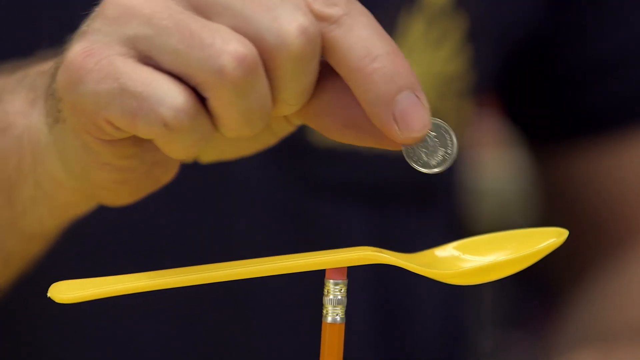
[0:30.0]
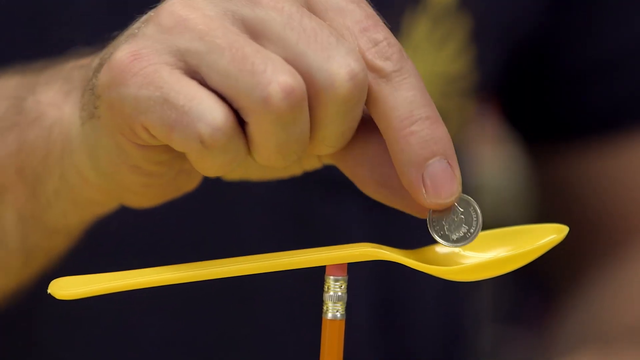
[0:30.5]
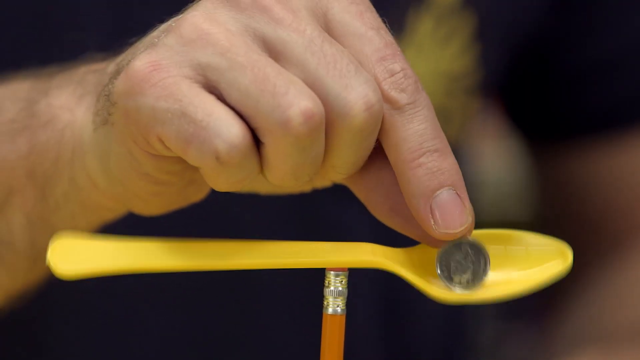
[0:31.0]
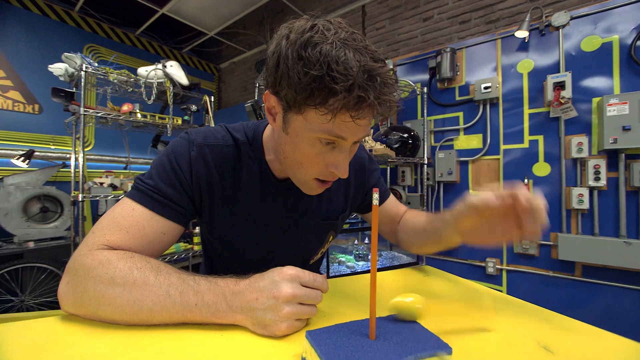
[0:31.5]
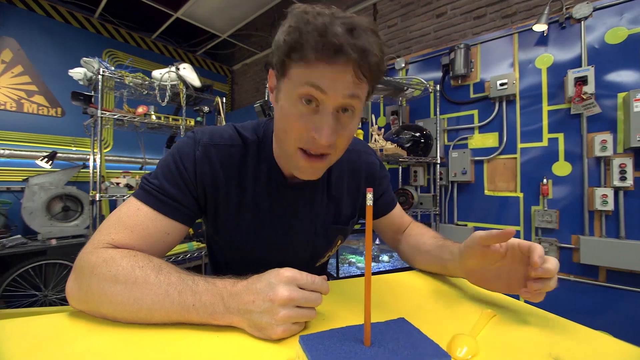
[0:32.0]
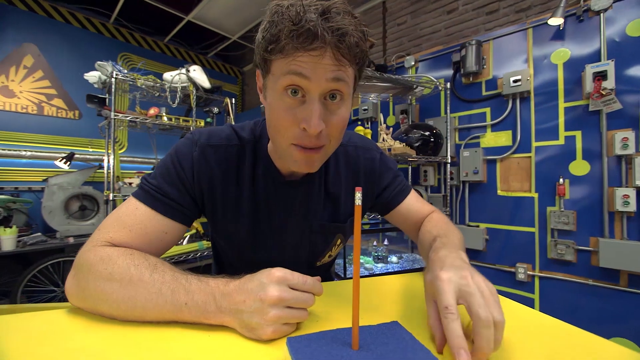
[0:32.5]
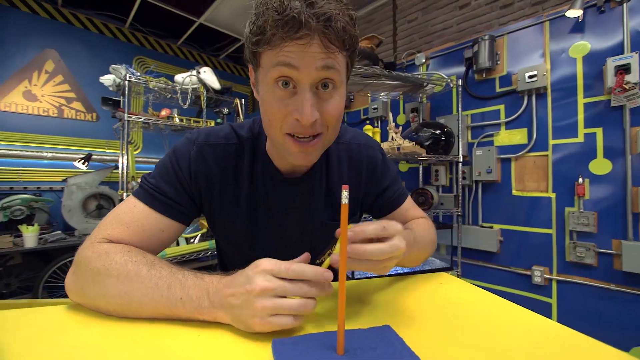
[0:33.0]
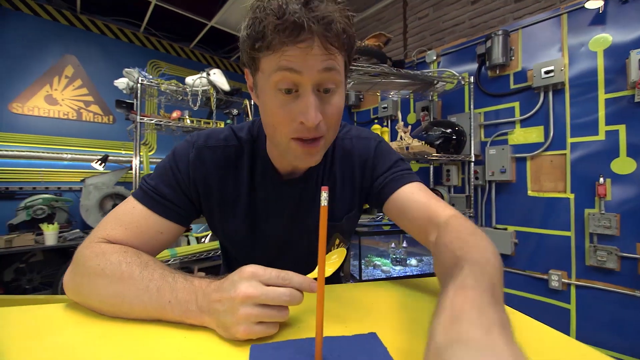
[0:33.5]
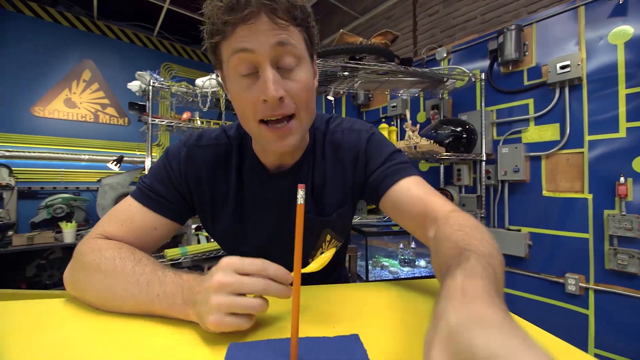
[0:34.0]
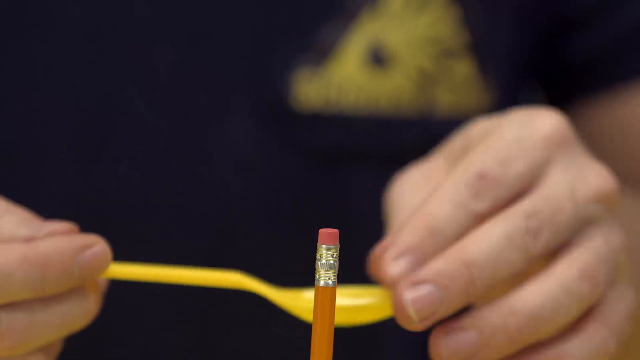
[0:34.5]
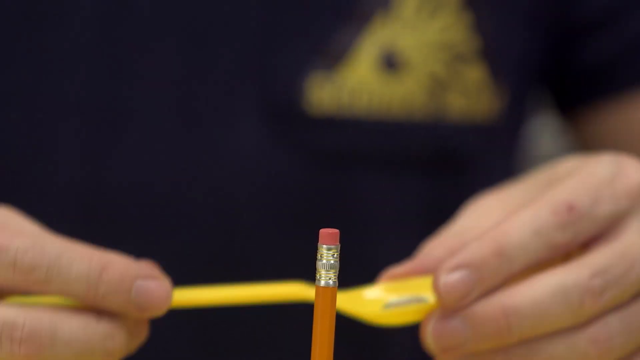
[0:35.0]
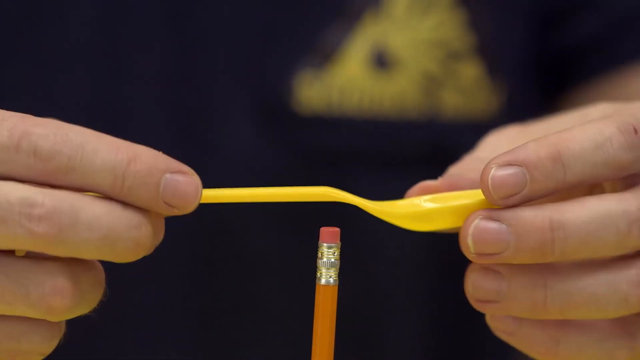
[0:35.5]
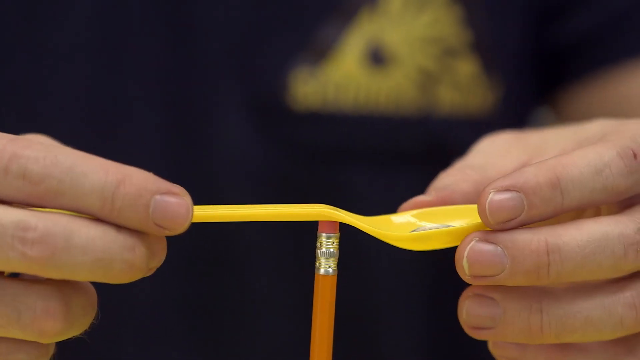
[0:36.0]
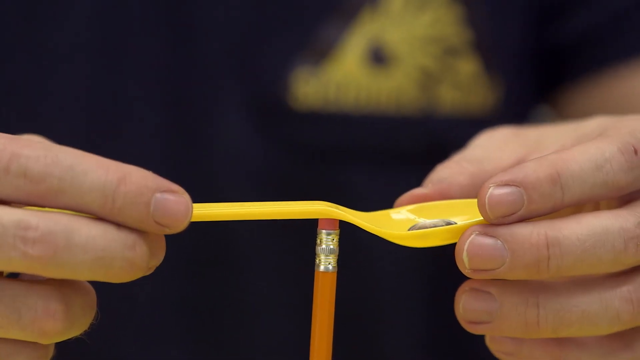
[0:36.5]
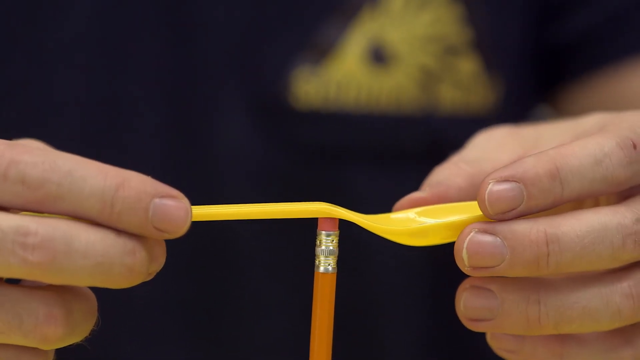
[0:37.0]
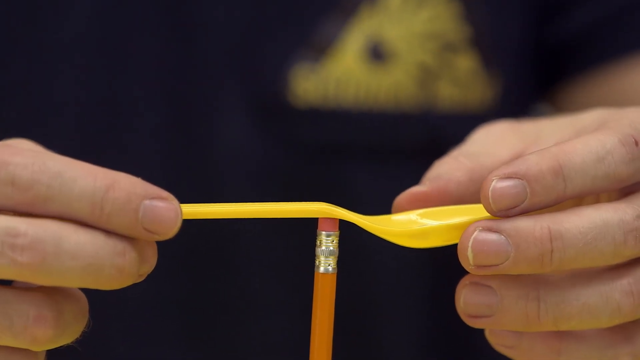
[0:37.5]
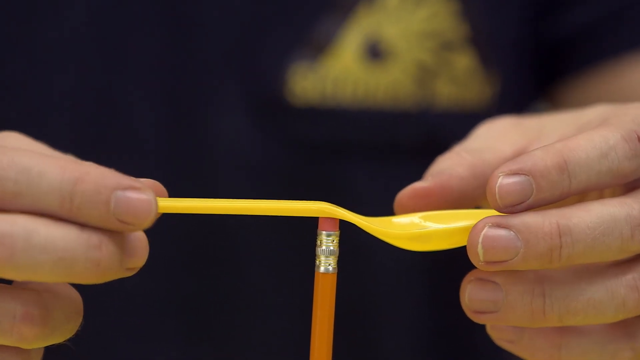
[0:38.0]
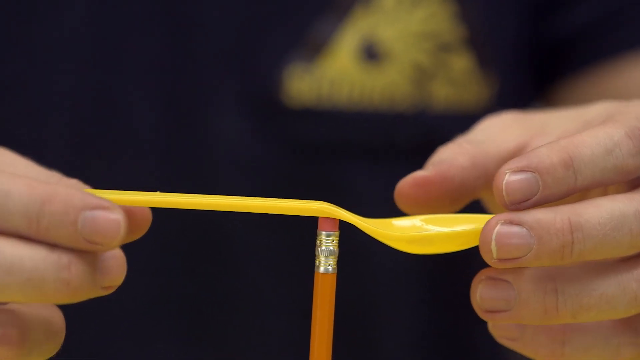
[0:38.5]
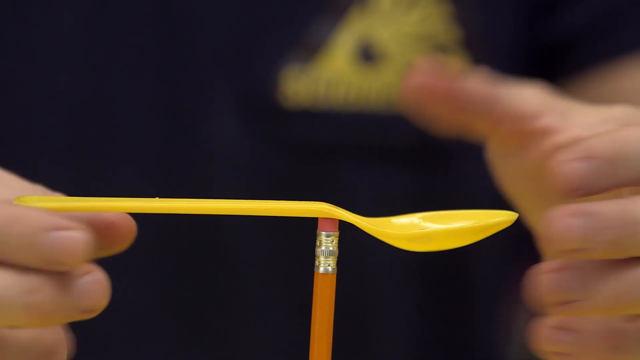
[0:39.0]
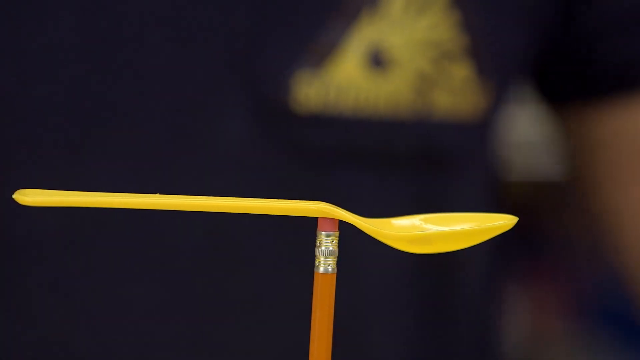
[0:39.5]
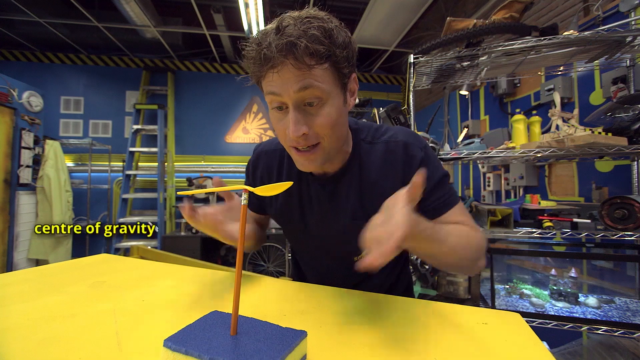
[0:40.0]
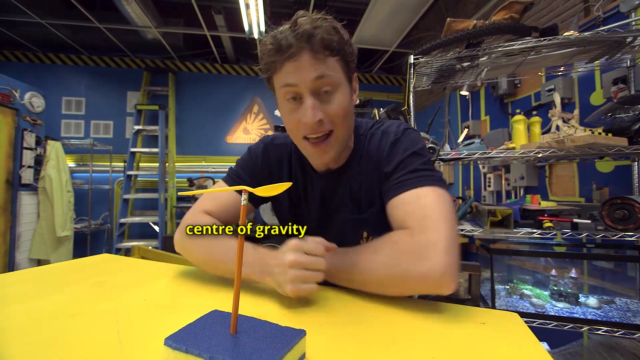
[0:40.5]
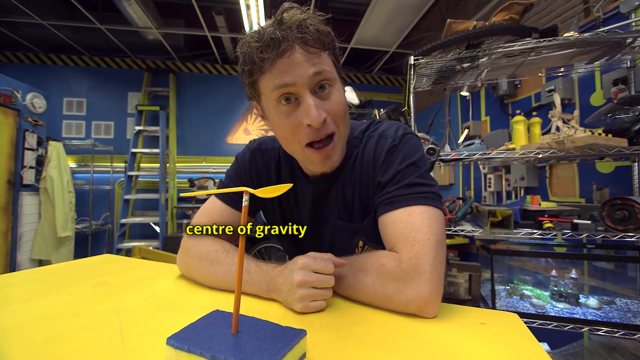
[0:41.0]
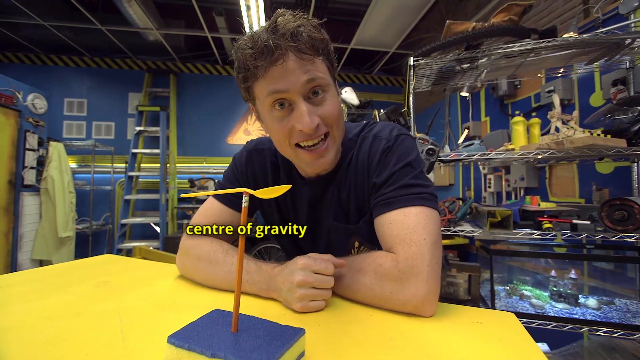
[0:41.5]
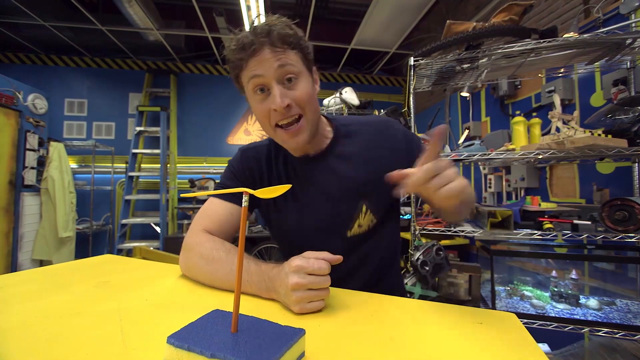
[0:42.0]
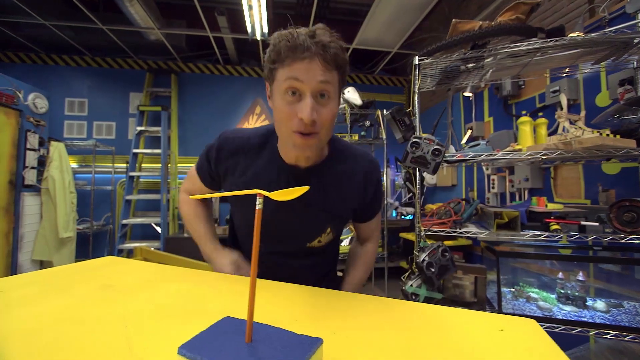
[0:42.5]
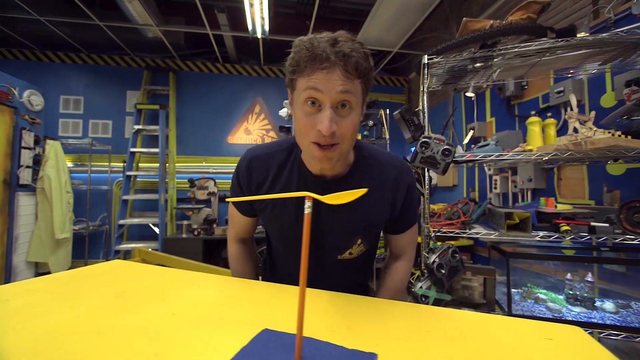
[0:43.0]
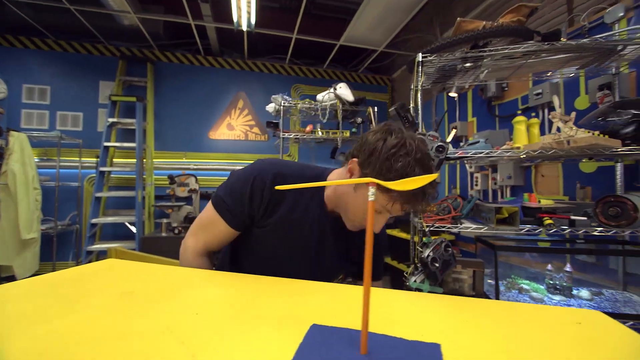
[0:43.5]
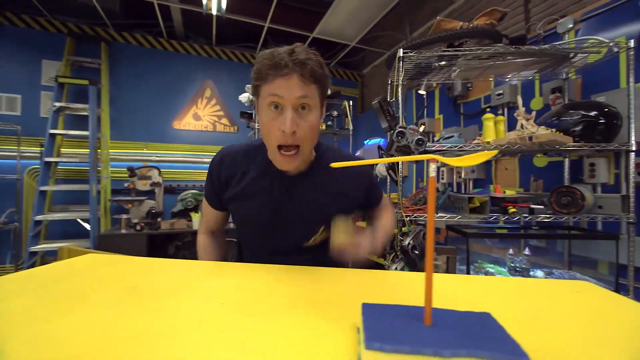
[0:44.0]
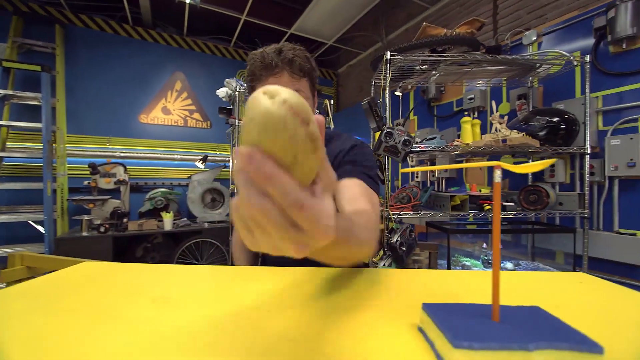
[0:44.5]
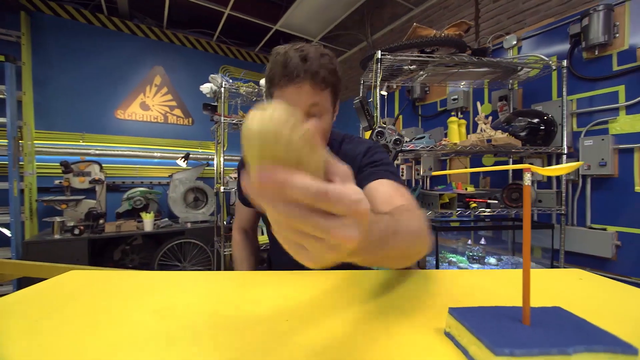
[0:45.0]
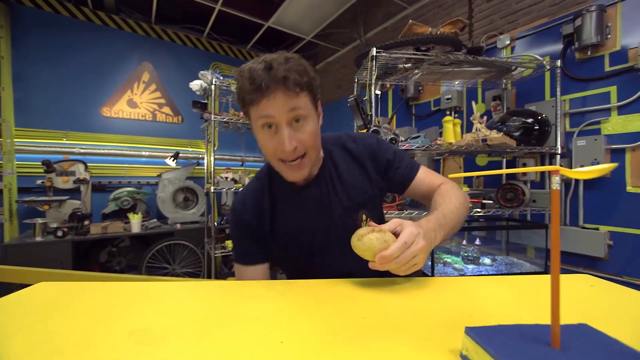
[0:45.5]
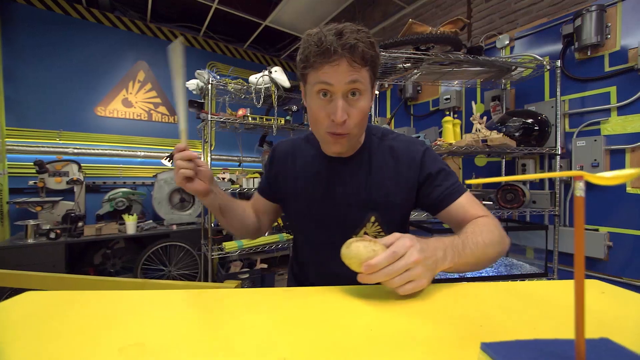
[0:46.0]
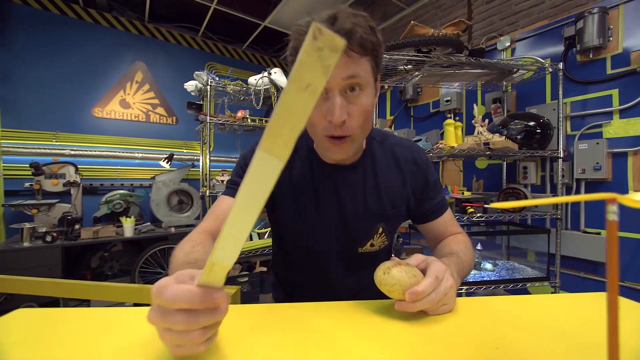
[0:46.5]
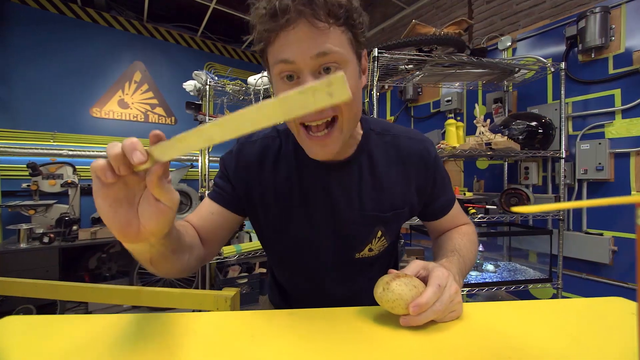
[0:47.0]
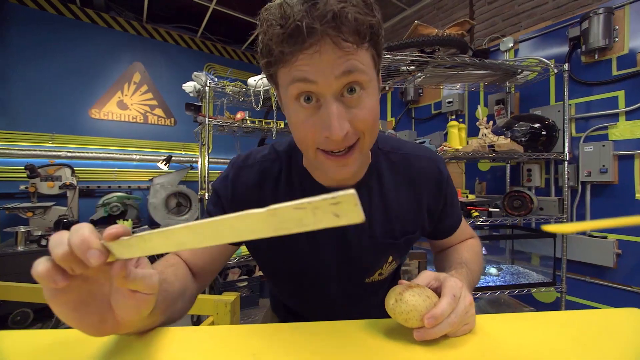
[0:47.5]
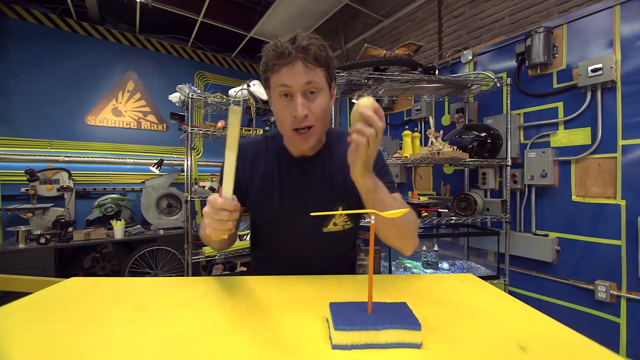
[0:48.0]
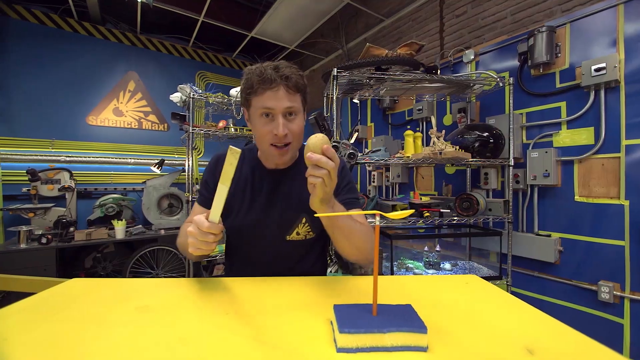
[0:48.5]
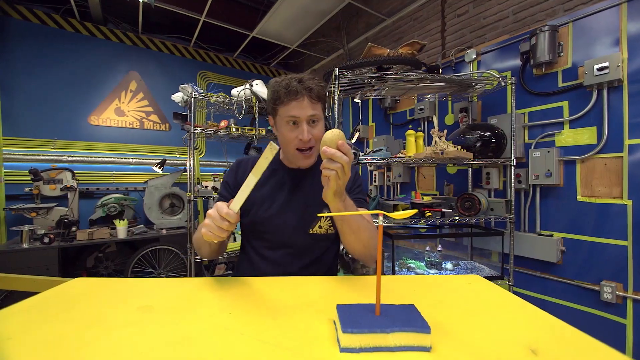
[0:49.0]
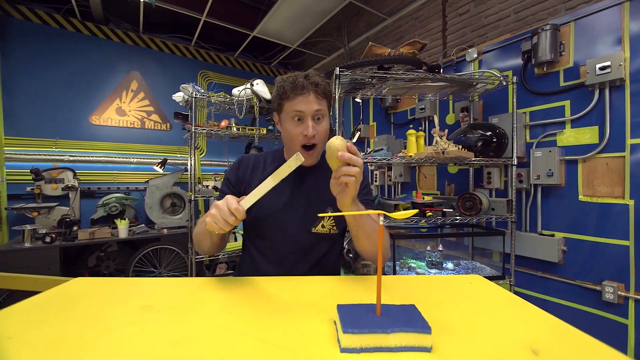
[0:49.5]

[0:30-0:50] A man pinches a coin over a spoon placed precariously on the rubber end of a pencil. He places the coin onto the spoon and the spoon falls. From a new angle, the man looks down as the spoon falls and clatters onto the yellow table. He looks up and smiles toward the camera as he picks up the spoon in his left hand and puts the coin into the spoon's head. He places the spoon gently on top of the pencil and slowly brings his hands away, and the spoon balances on the rubber end of the pencil. Beneath the spoon, yellow text appears from the left side of the frame reading "center of gravity". The man faces the camera with his hands crossed in front of him, then brings up his left hand and points in the air before bringing both hands down to his sides. The camera pans to the left as the man looks down beneath him and pulls out a potato. He then pulls out a ruler in his right hand, holds it up to the camera, looks at it in front of his face, and points it toward the potato.